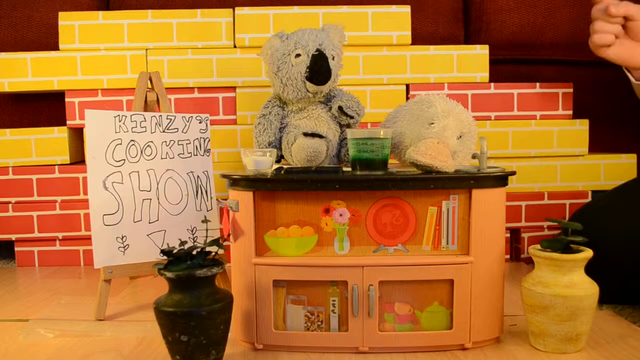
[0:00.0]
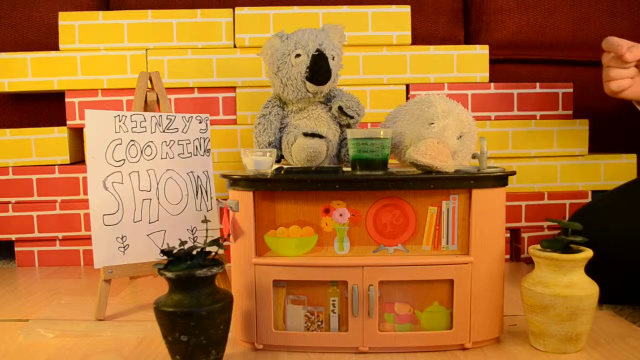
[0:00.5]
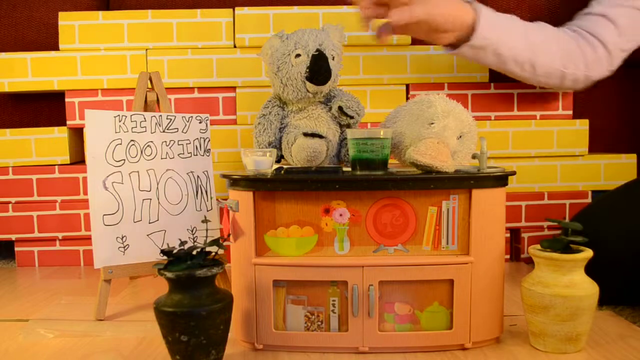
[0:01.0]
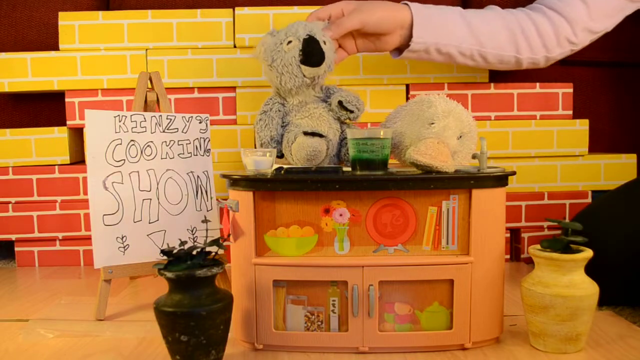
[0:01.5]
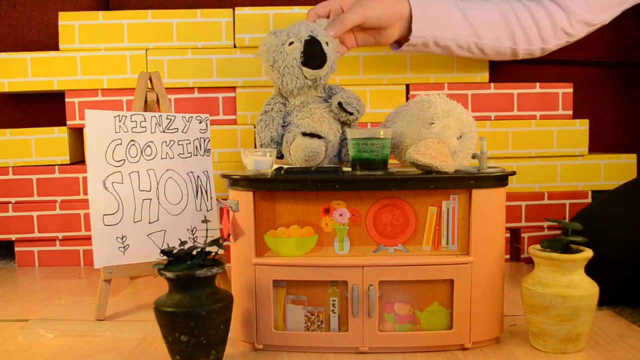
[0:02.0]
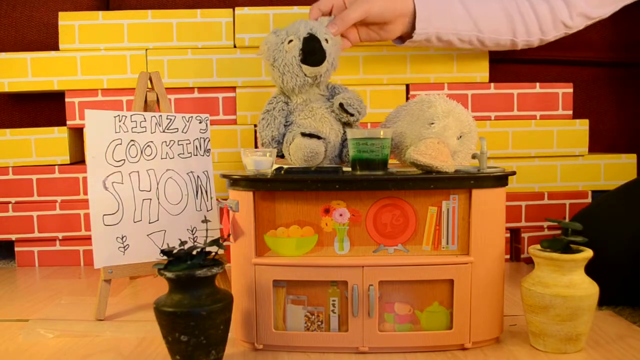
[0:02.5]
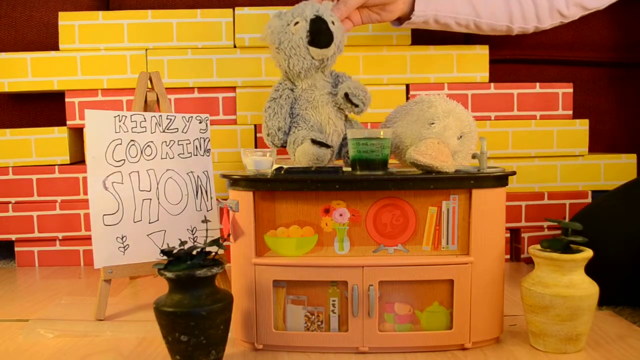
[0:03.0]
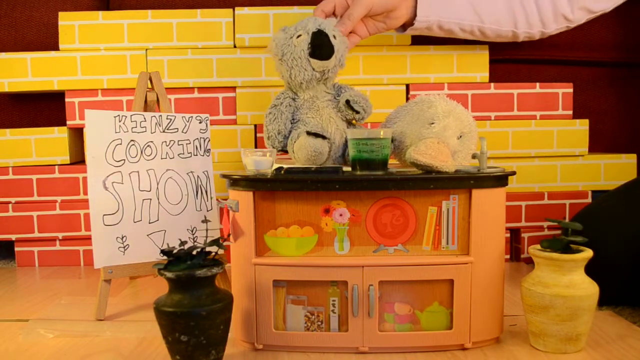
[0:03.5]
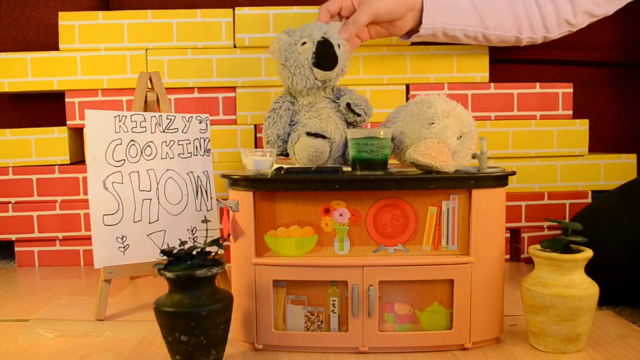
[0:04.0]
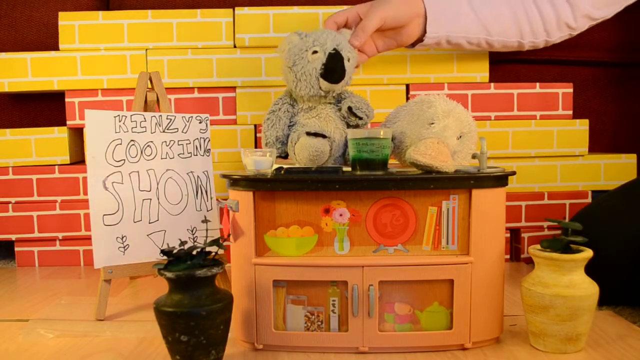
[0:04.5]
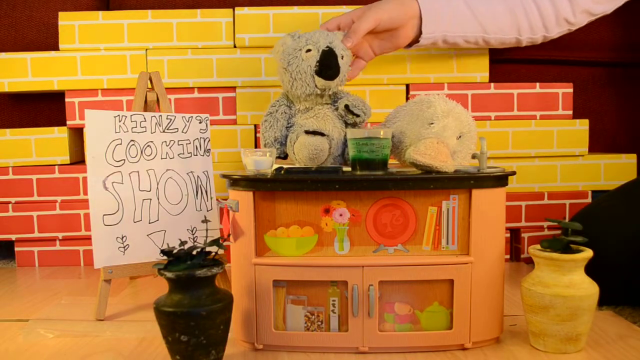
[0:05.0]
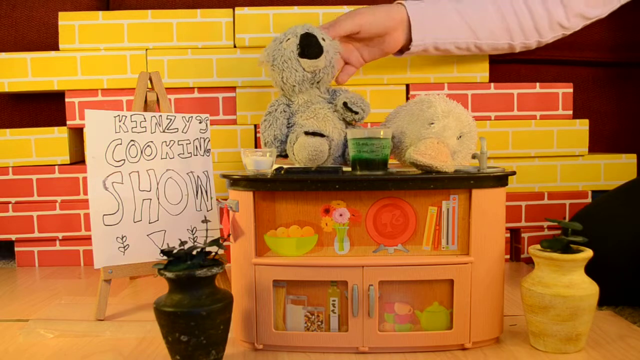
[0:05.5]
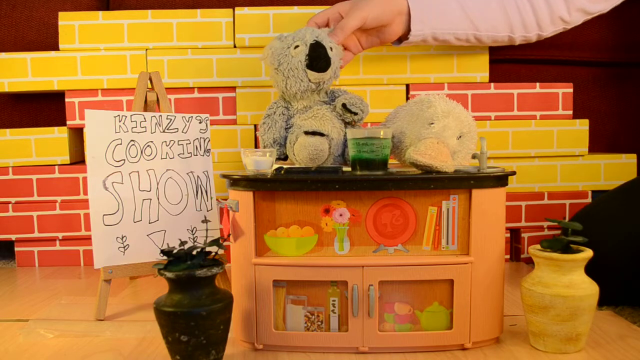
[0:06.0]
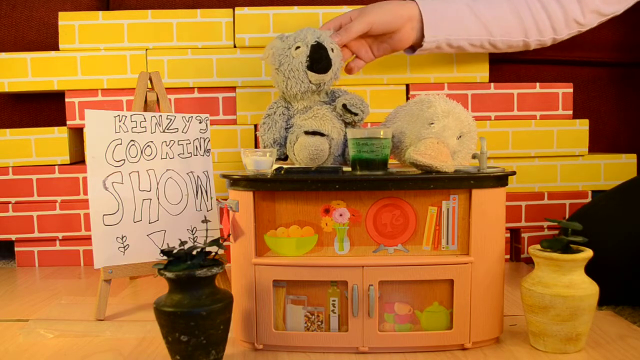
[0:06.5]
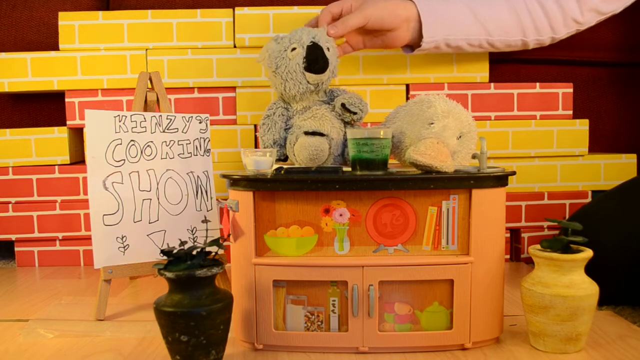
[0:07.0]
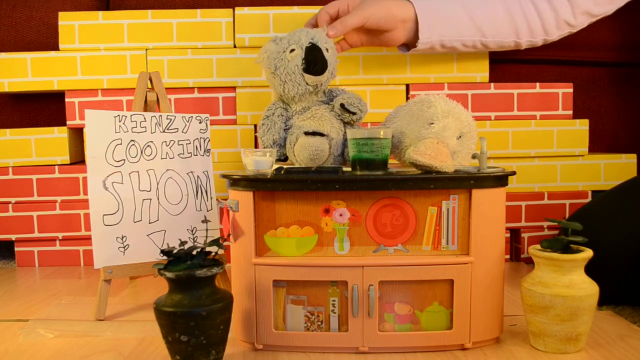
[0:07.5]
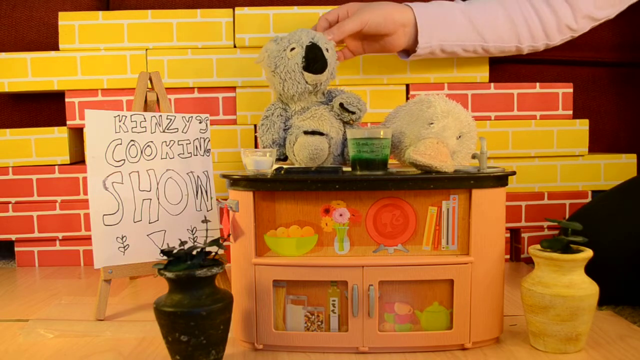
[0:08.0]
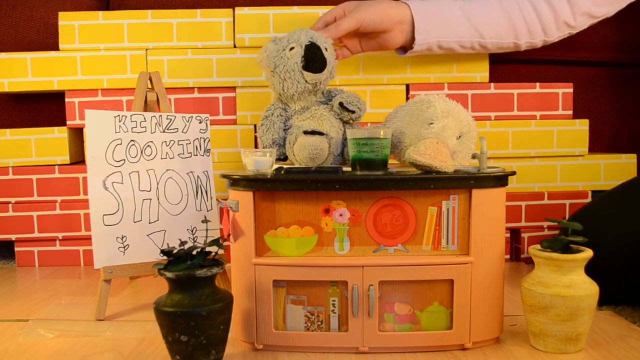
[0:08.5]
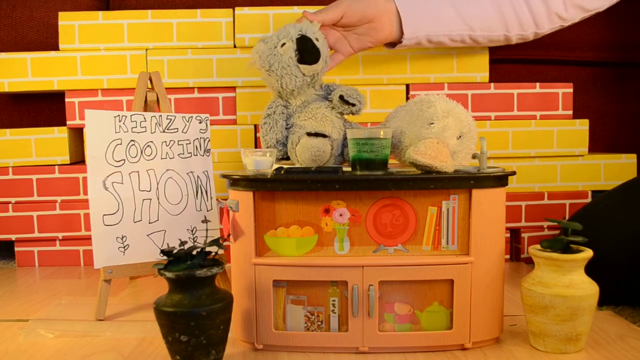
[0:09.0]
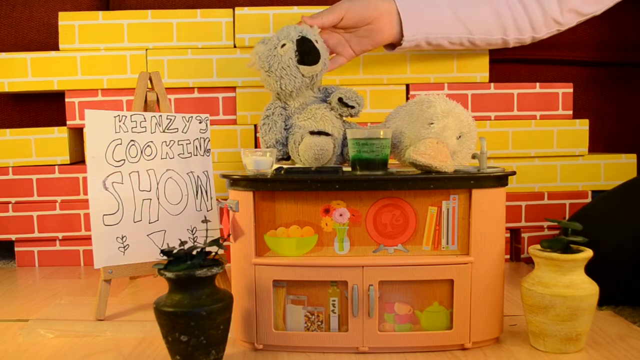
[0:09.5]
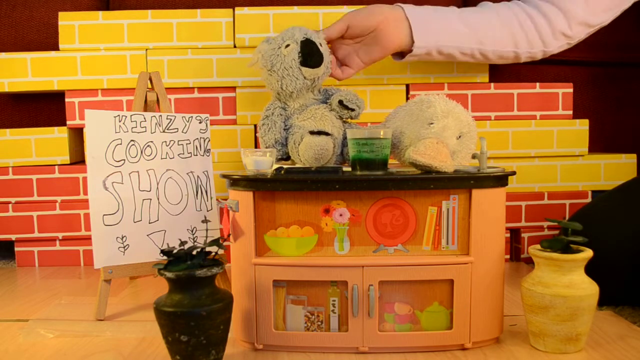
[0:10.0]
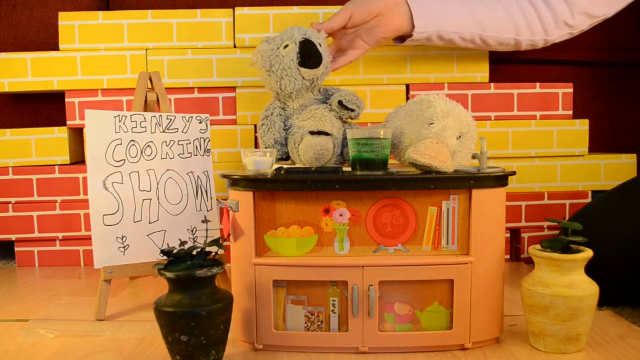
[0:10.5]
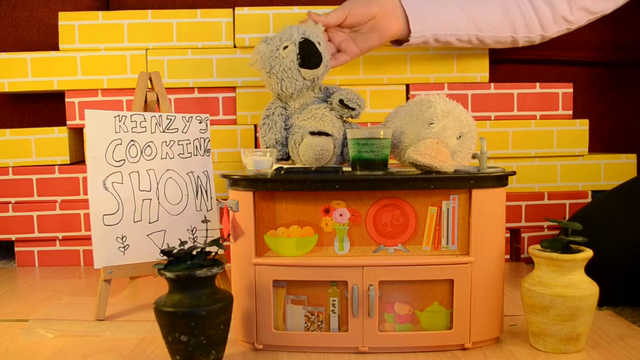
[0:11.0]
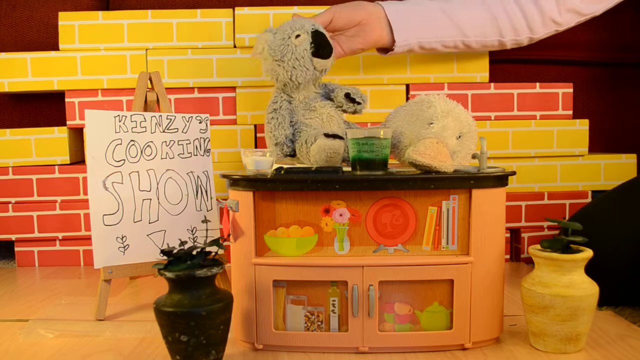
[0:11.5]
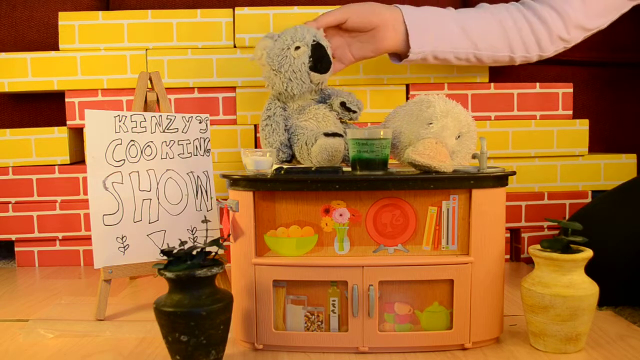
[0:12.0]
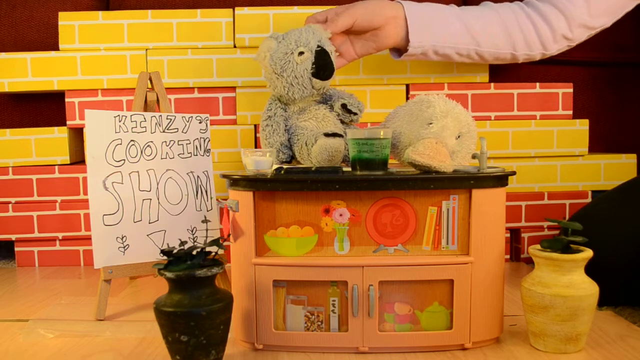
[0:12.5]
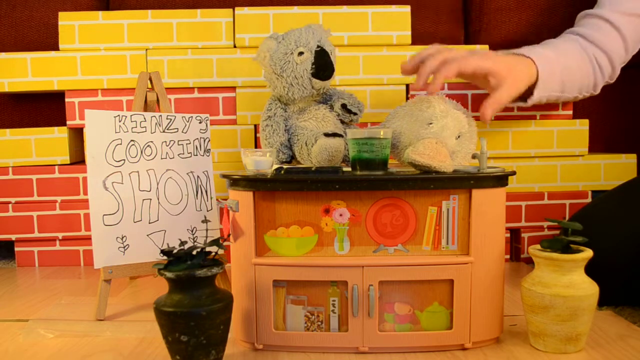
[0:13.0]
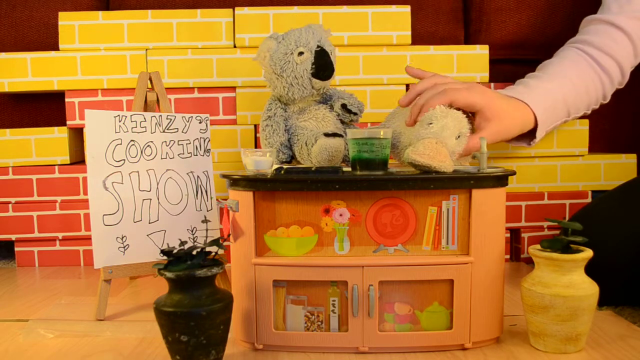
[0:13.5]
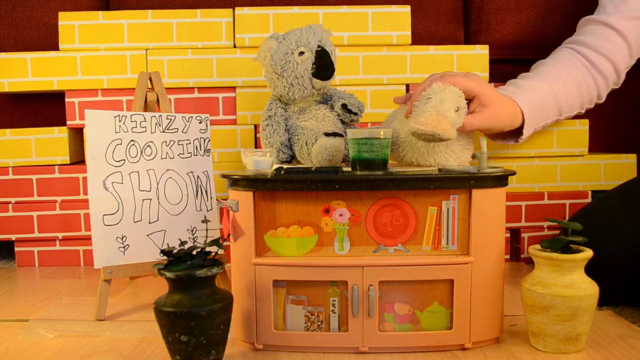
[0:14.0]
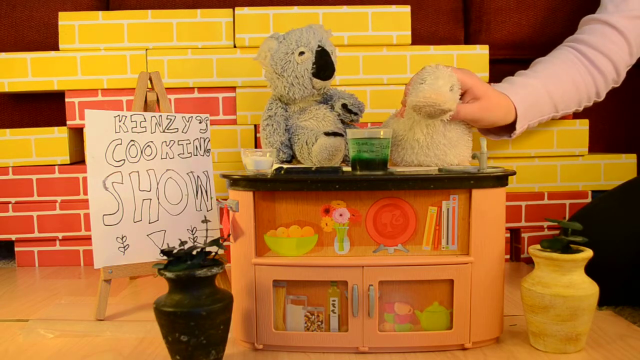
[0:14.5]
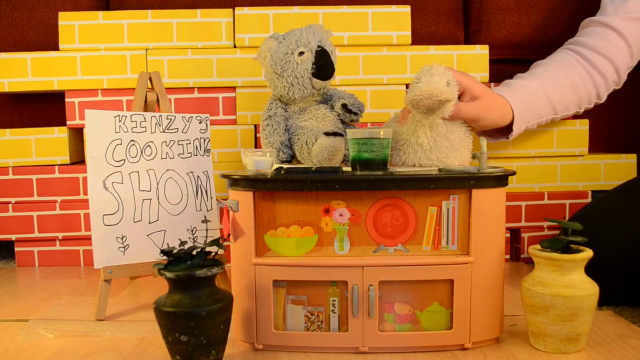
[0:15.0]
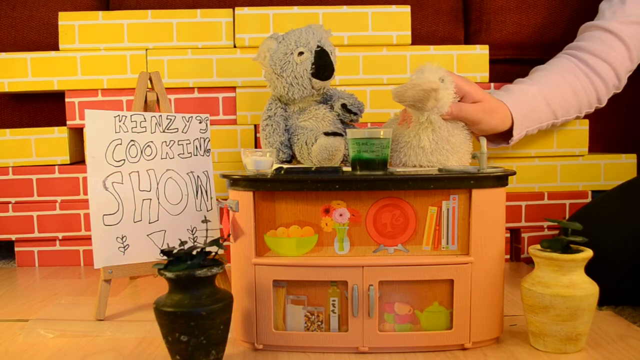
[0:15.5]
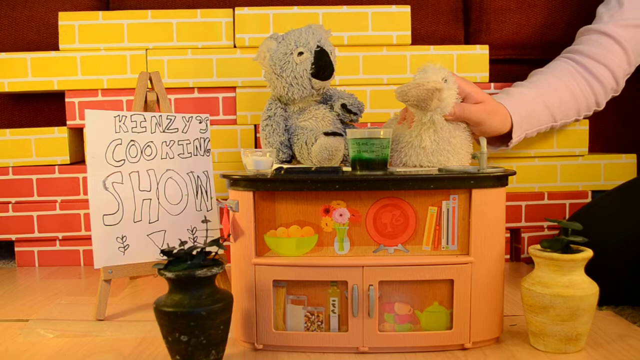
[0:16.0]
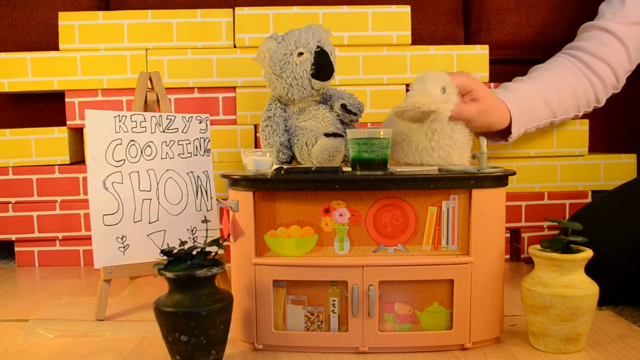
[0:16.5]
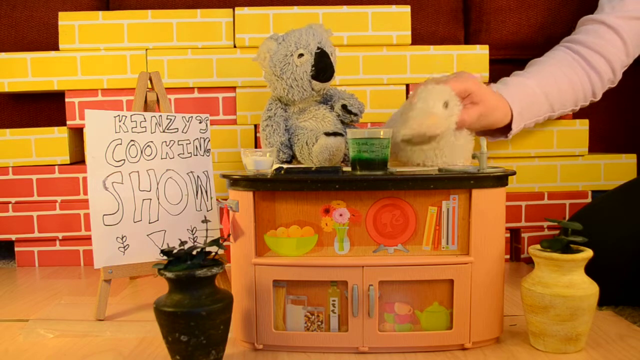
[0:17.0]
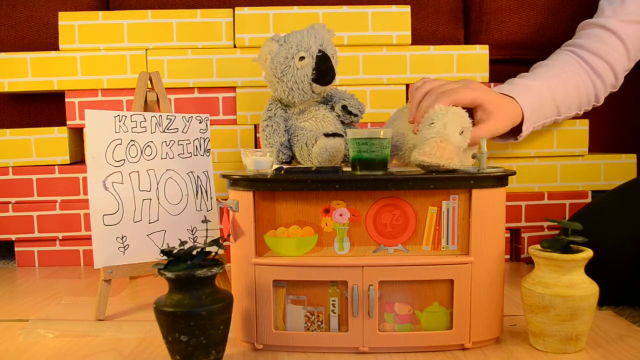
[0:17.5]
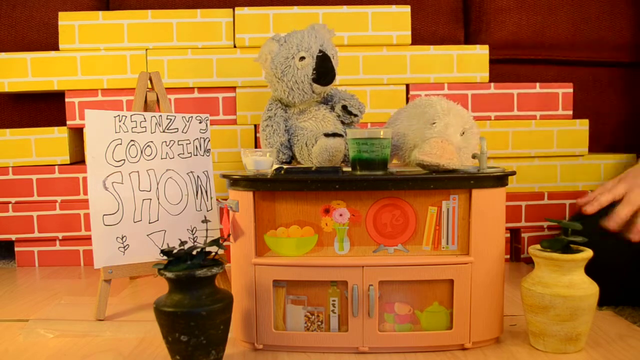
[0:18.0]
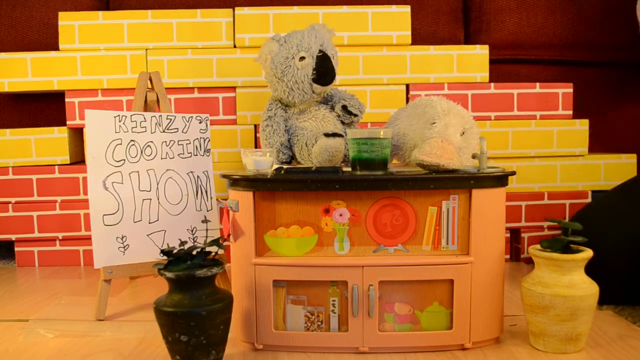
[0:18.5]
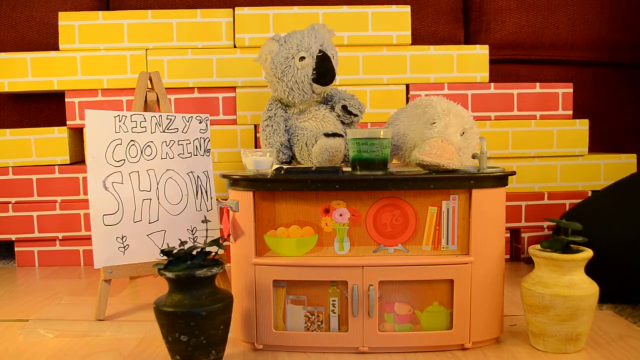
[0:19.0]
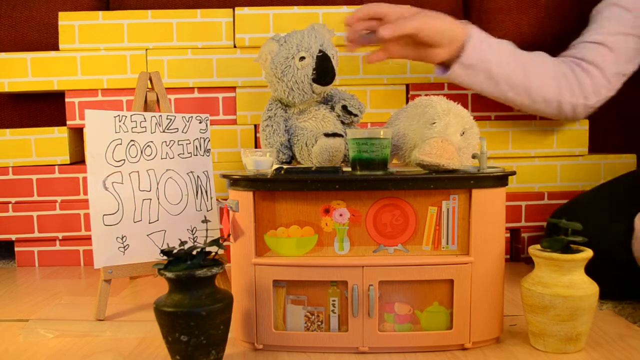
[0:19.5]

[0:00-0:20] A handwritten whiteboard reads "Kinsey Cooking Show." There is a cupboard, and above it are a bowl full of salt and a jar with a green substance. A fluffy cartoon figure is seated on the table, along with another fluffy cartoon of a duck sitting on the table; the duck is white with a big yellow beak. A yellow flower vessel holding a green plant is on the right, and a black vessel with a green plant on it is on the left. Inside the cupboard are a red plate, another vessel with flowers, a bowl with eggs on it, and a section of books that are definitely recipe books. A hand touches the duck, then a whistle, then the fluffy teddy bear.